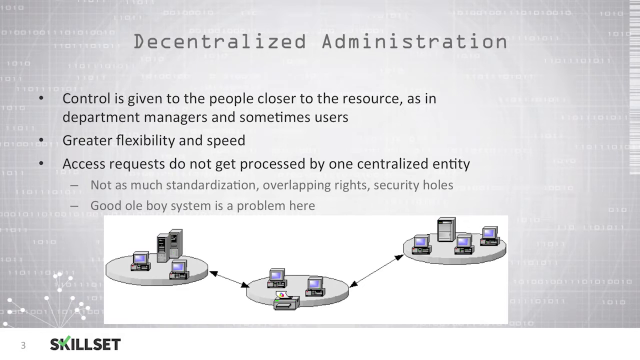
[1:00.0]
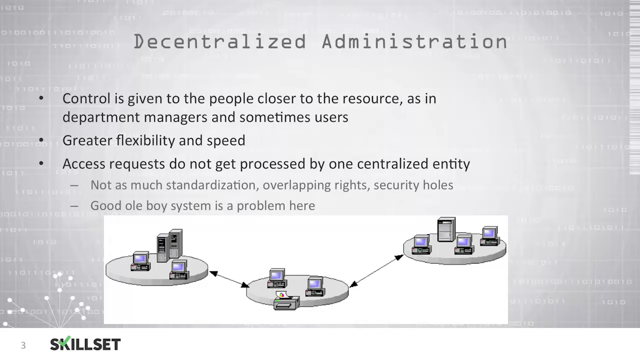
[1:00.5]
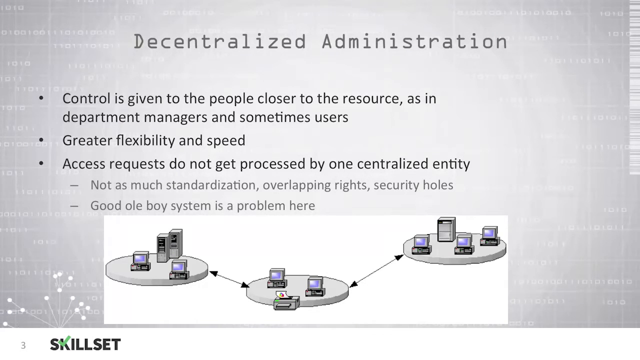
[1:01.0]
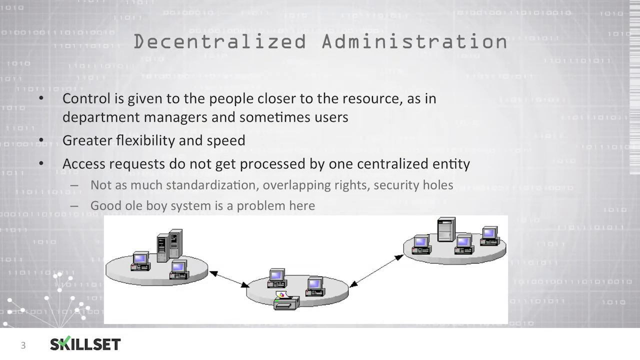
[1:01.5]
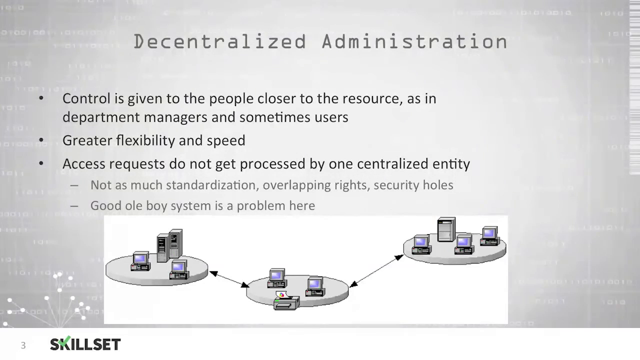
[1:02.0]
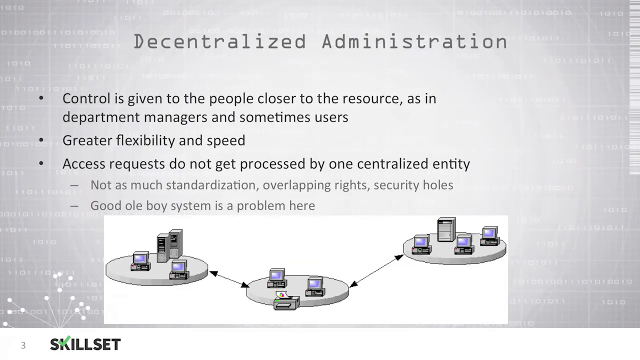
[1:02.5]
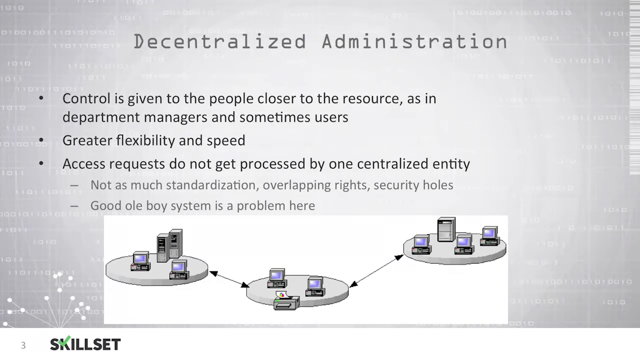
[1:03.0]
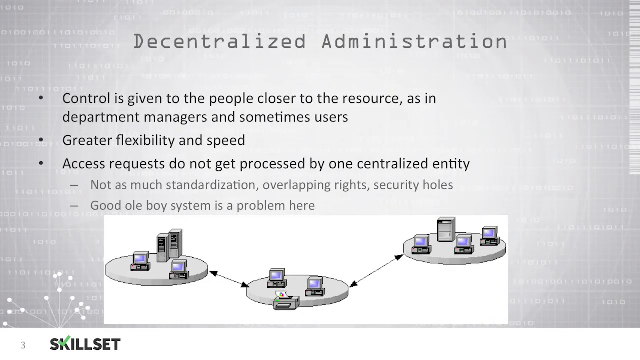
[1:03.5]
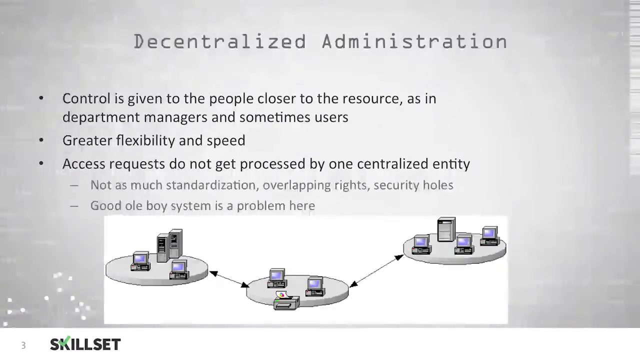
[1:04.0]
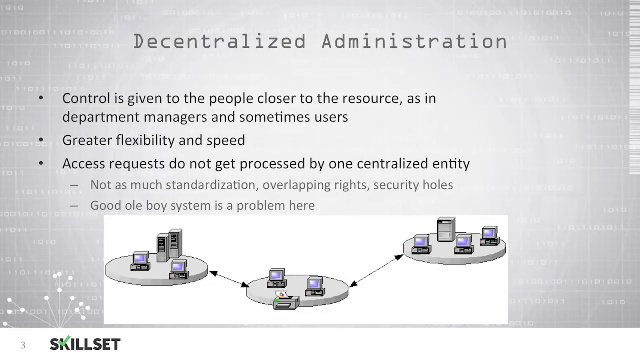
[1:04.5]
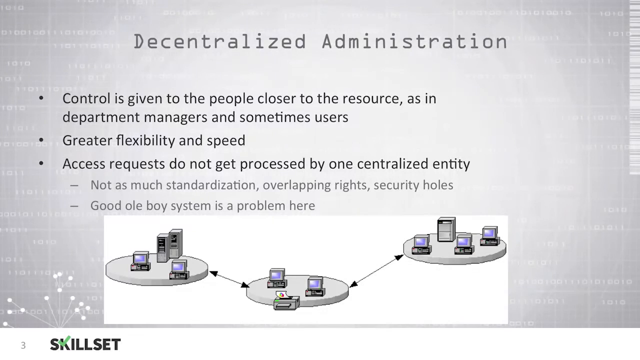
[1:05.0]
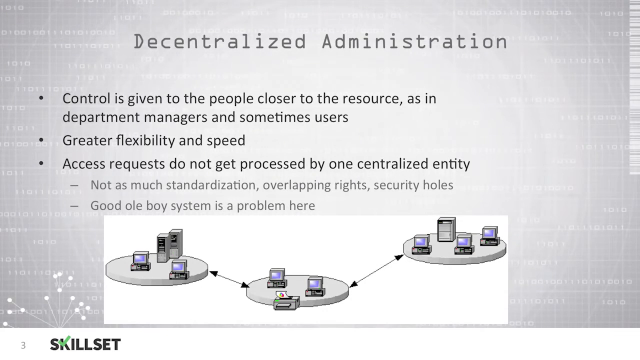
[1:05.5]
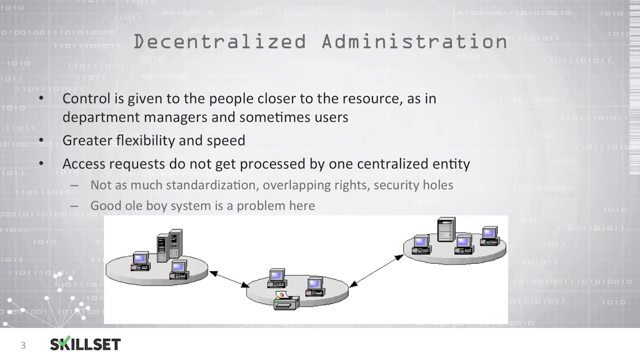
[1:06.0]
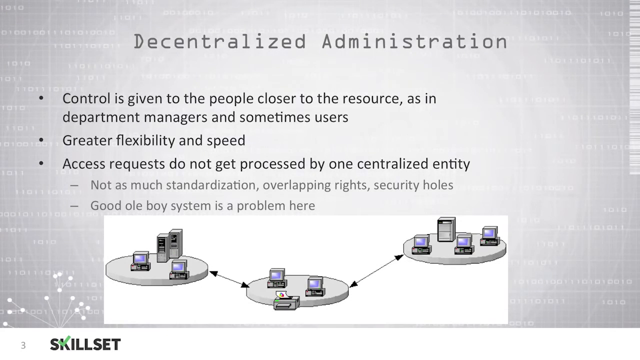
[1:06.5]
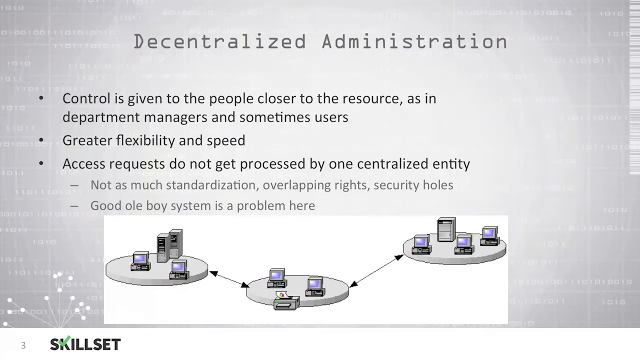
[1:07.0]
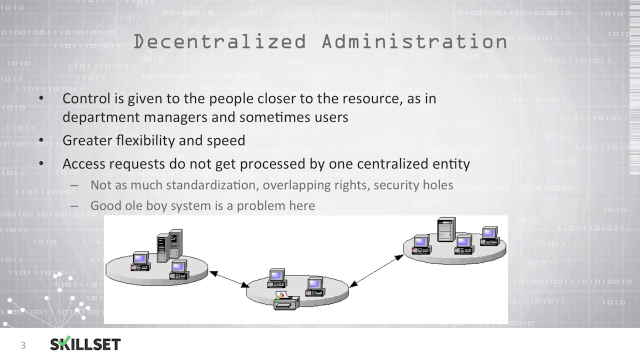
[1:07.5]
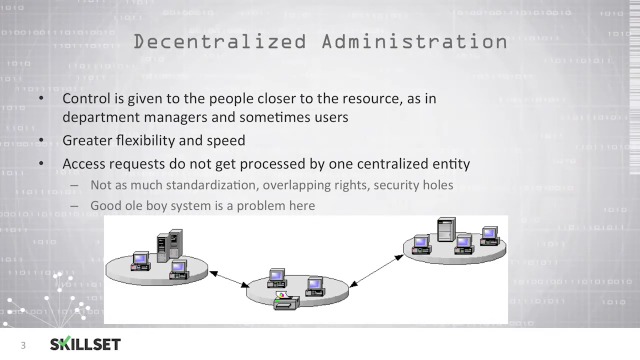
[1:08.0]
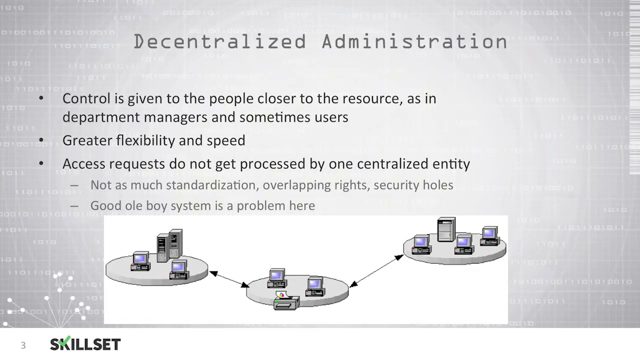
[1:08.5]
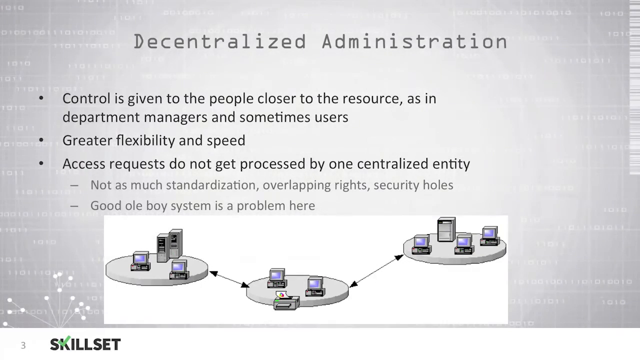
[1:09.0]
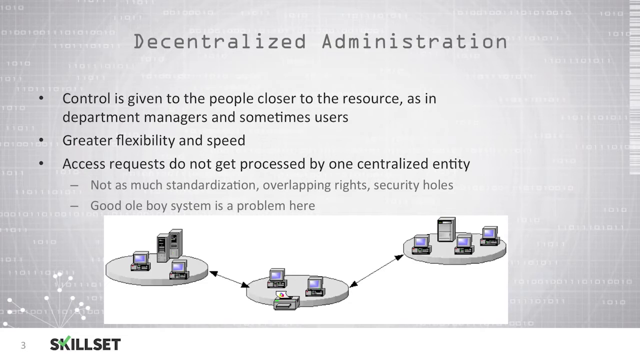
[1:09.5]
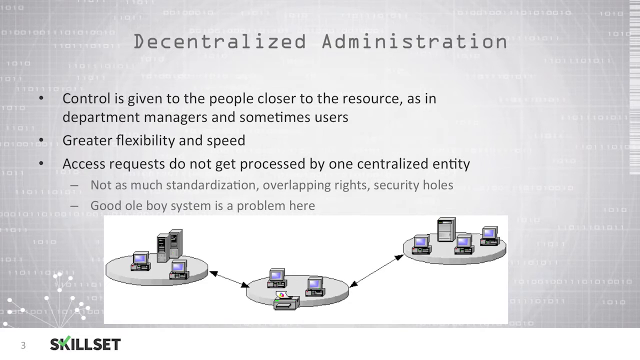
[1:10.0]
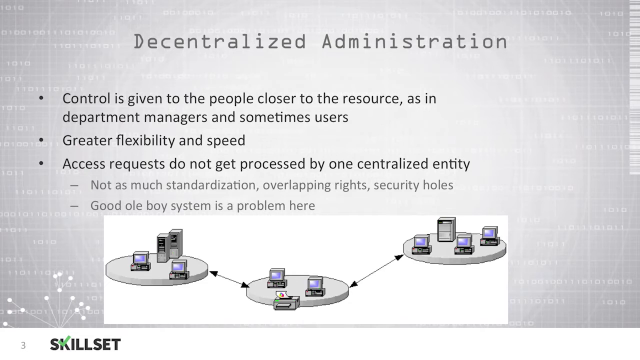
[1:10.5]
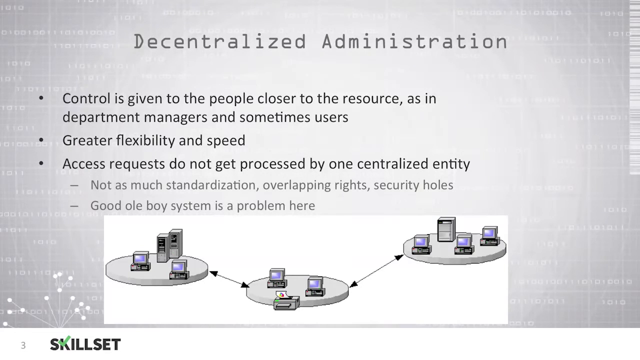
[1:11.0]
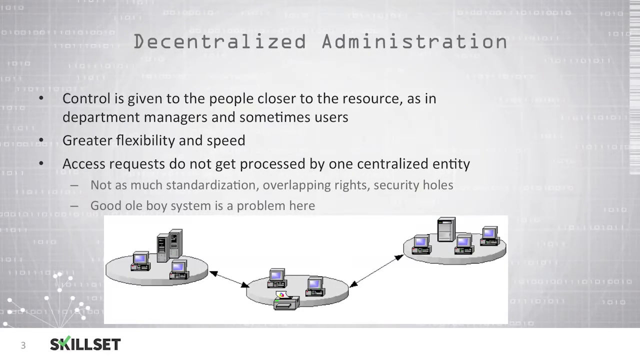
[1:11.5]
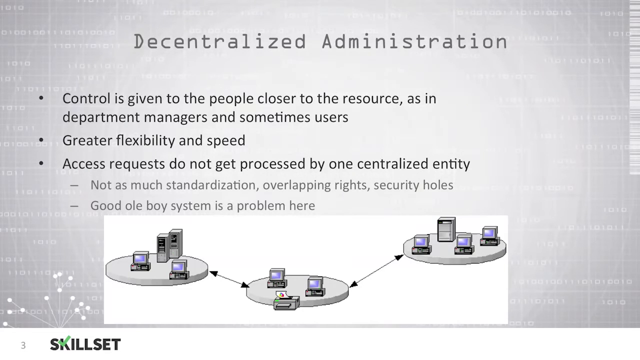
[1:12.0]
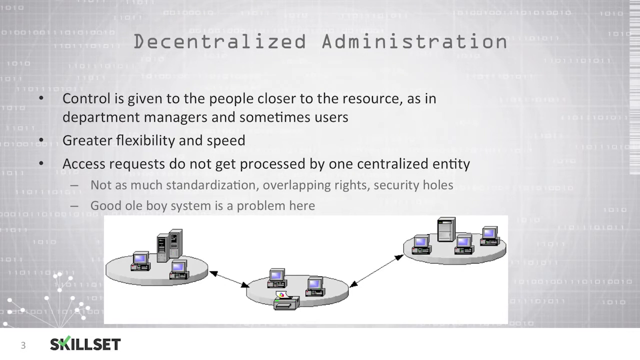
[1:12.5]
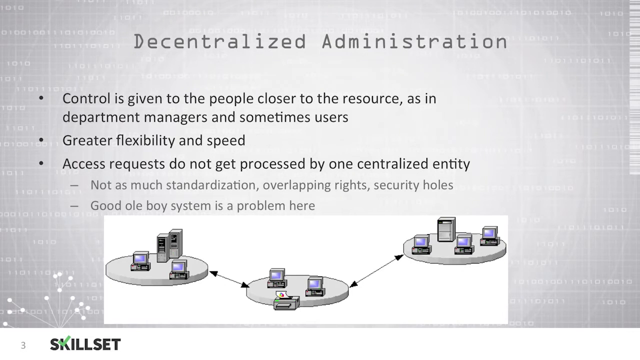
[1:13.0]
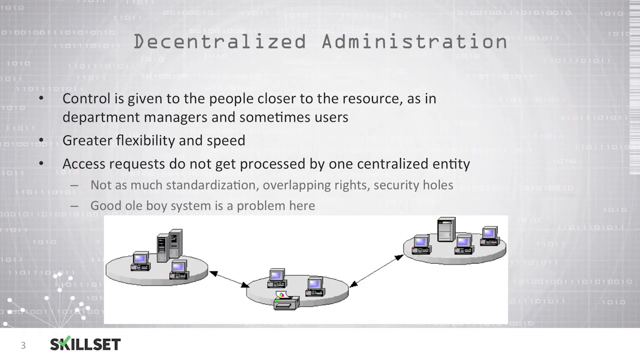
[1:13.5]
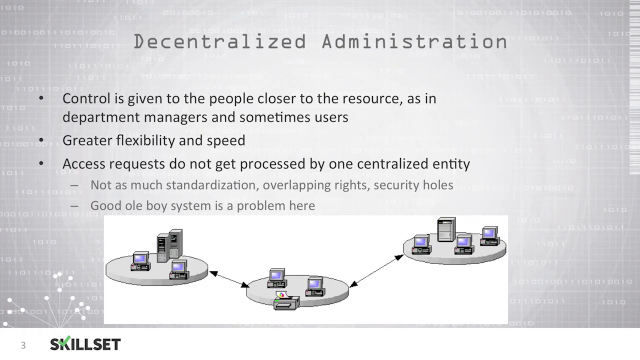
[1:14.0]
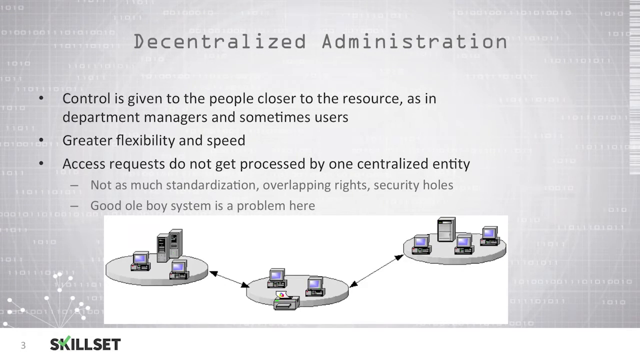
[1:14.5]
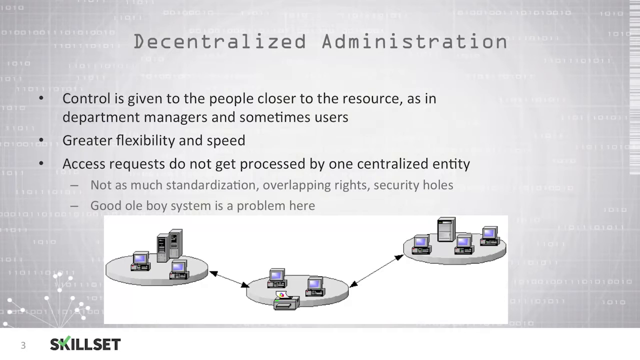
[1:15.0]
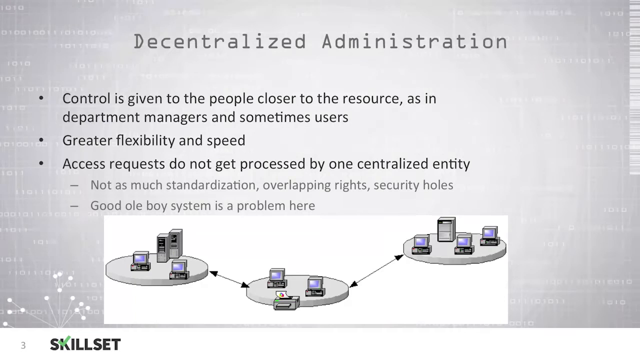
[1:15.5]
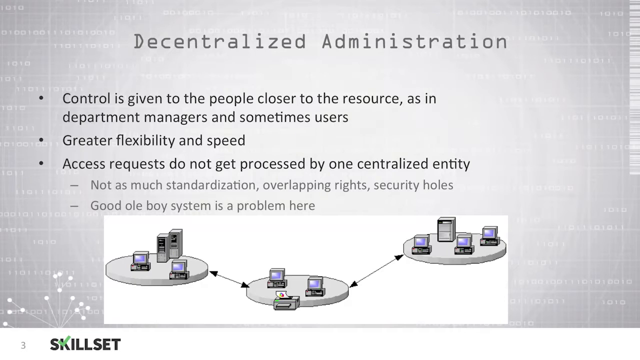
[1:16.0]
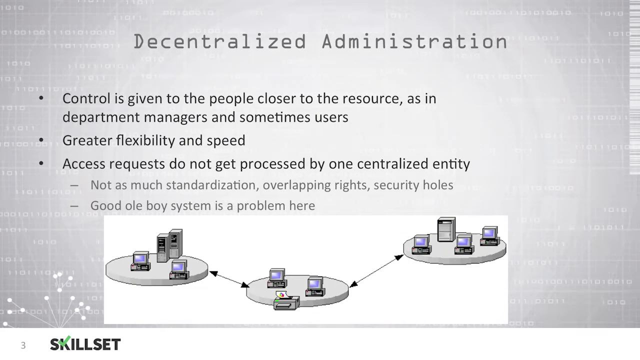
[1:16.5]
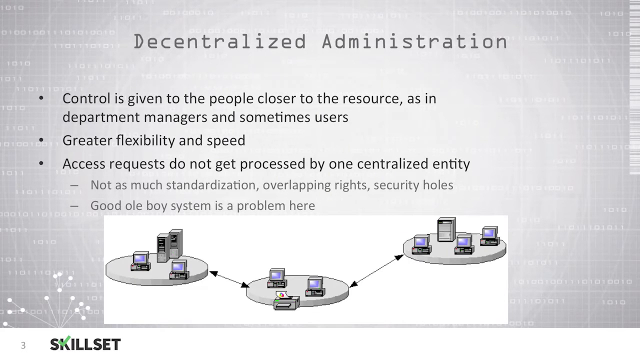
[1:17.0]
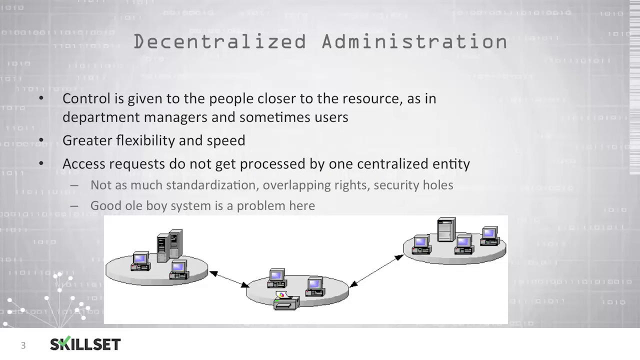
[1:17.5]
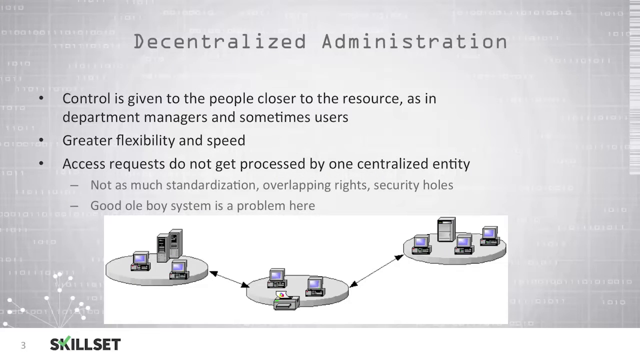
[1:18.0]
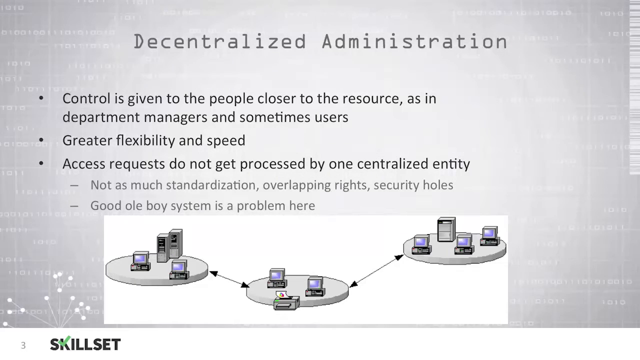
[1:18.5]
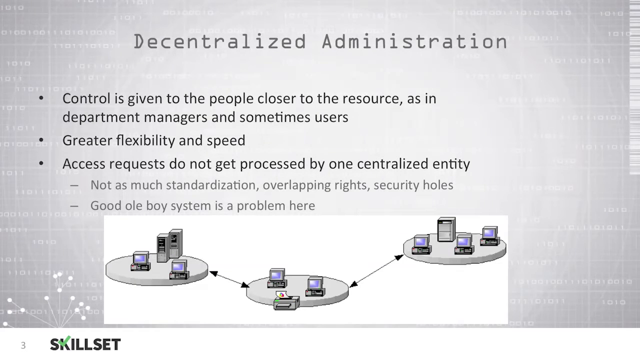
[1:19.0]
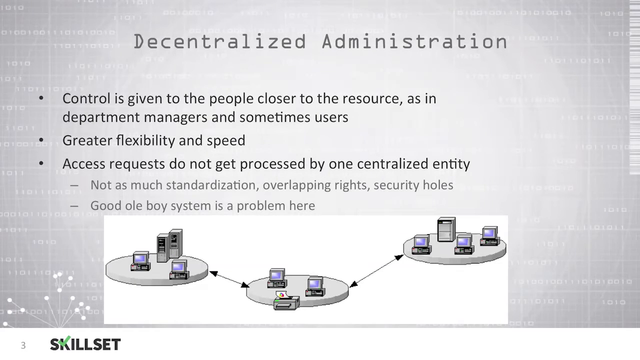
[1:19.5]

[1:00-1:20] The same Decentralized Administration page, page three, remains on screen with its three points: "control is given to the people closer to the resource, as in department managers and sometimes users", "greater flexibility and speed", and "access requests do not get processed by one centralized entity". The last point is supported by two smaller points in a lighter gray font than the darker main points: "not as much standardization, overlapping rights and security holes" and "good old boy system is a problem here". At the bottom is a picture diagram of three circular rendered objects, each with pictures of computers. The left circle has two computers and two towers, the middle circle has two computers and a printer, and the right circle has three computers and a printer. The picture has a white background that is even whiter than the background of the whole page.